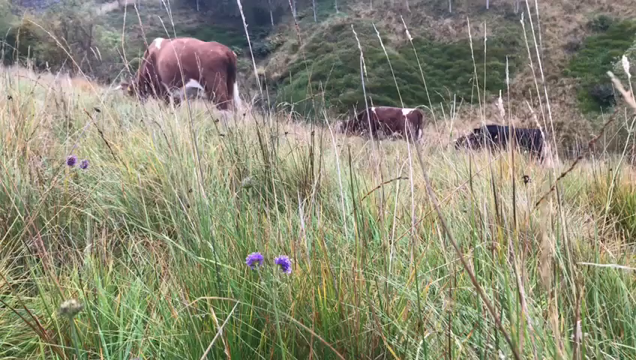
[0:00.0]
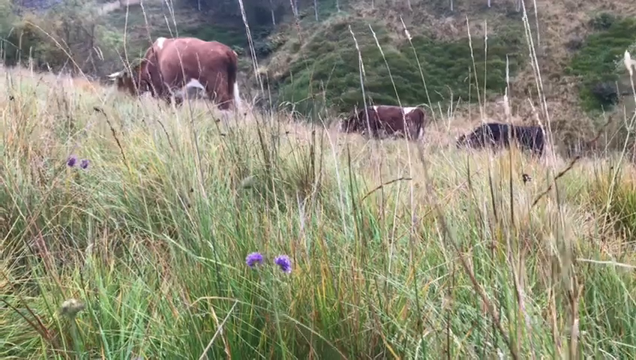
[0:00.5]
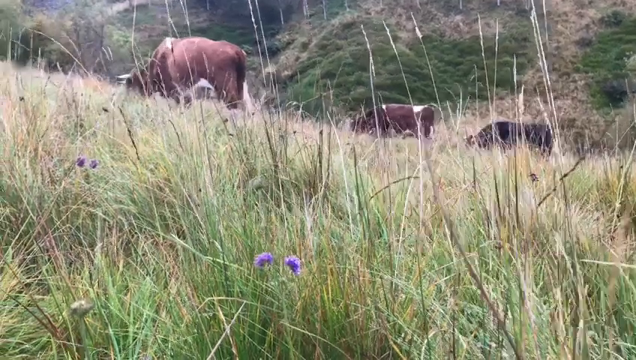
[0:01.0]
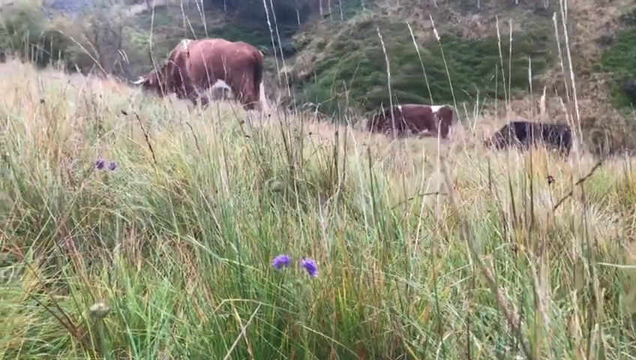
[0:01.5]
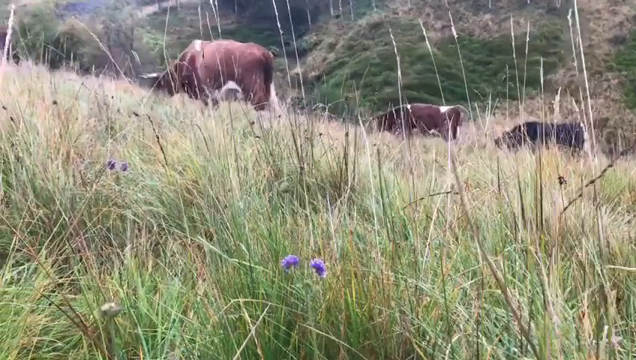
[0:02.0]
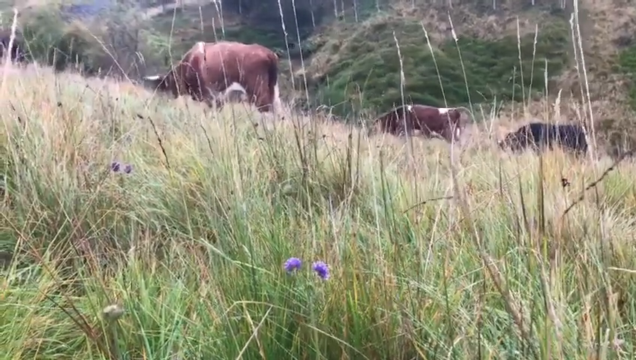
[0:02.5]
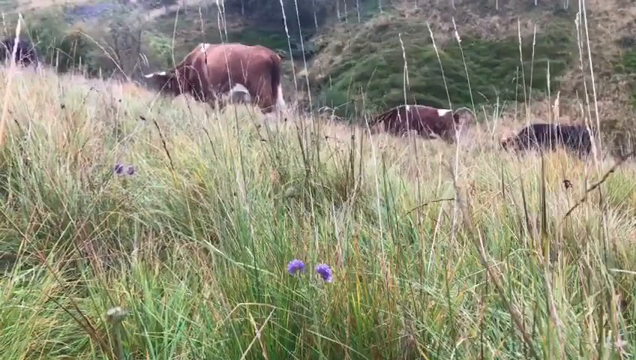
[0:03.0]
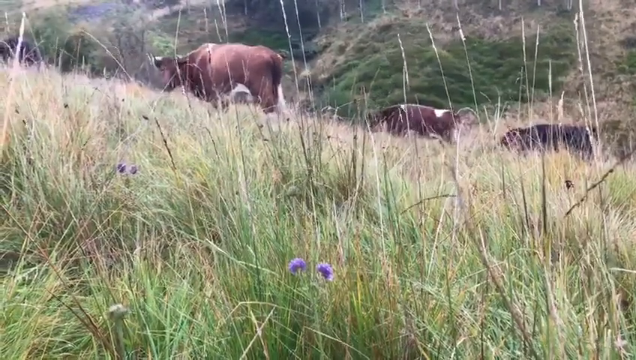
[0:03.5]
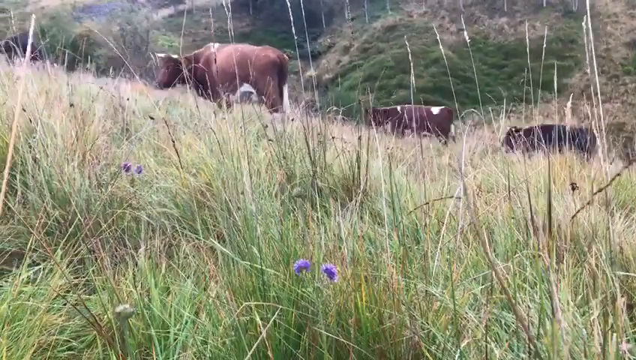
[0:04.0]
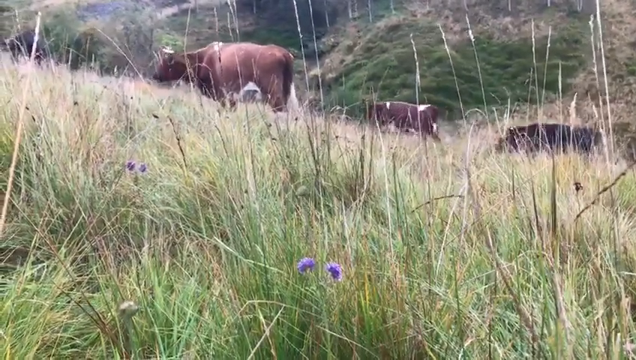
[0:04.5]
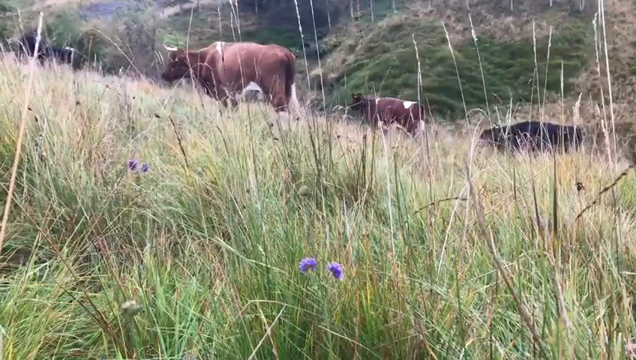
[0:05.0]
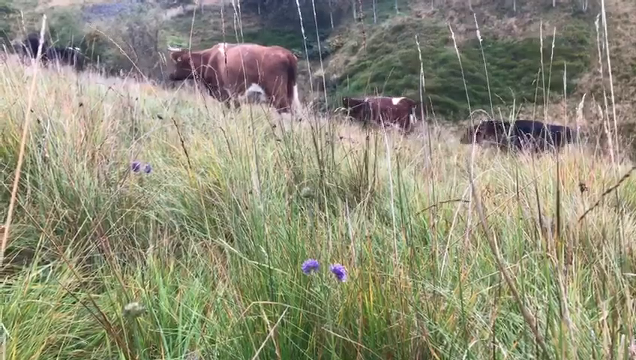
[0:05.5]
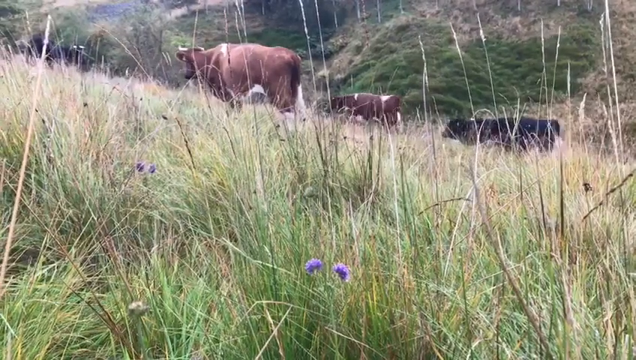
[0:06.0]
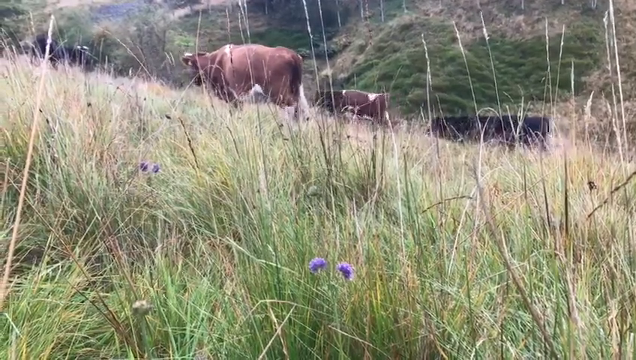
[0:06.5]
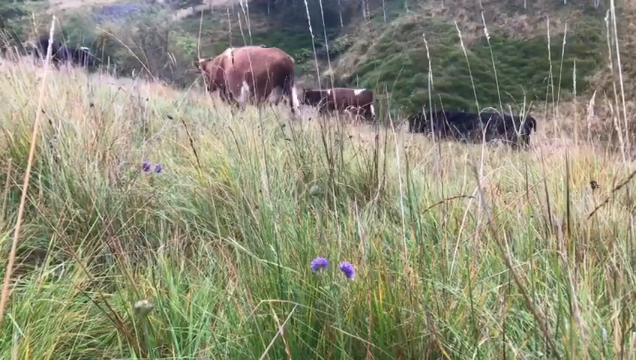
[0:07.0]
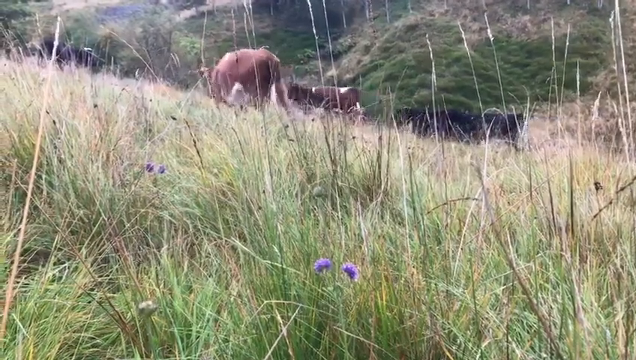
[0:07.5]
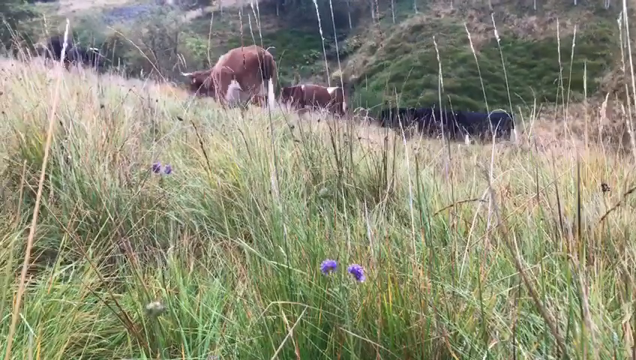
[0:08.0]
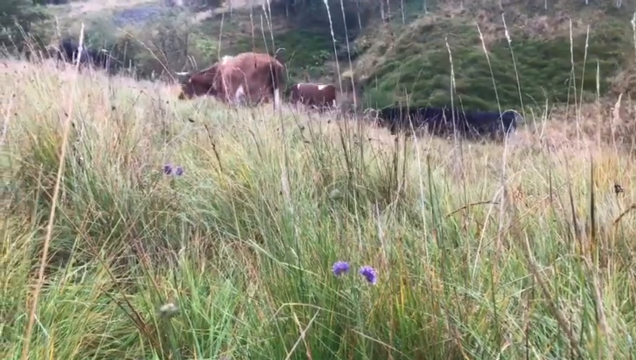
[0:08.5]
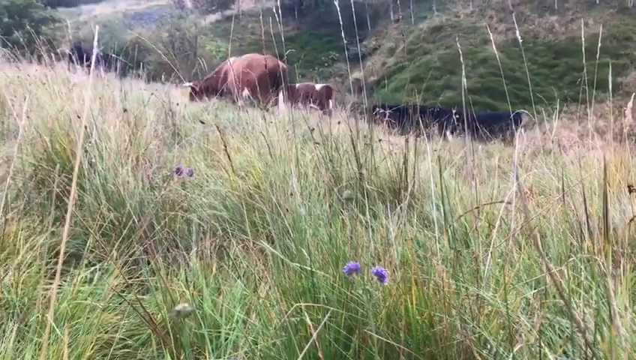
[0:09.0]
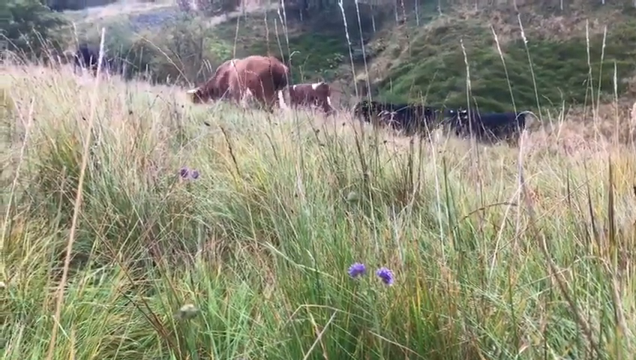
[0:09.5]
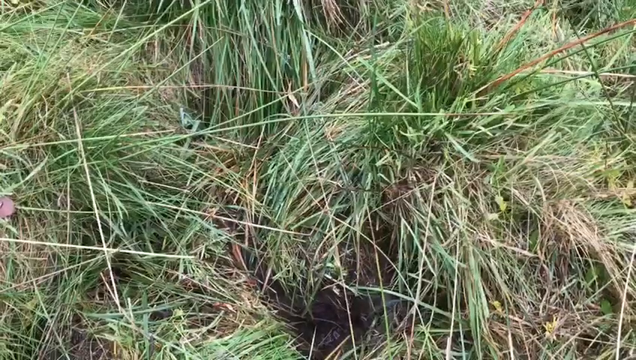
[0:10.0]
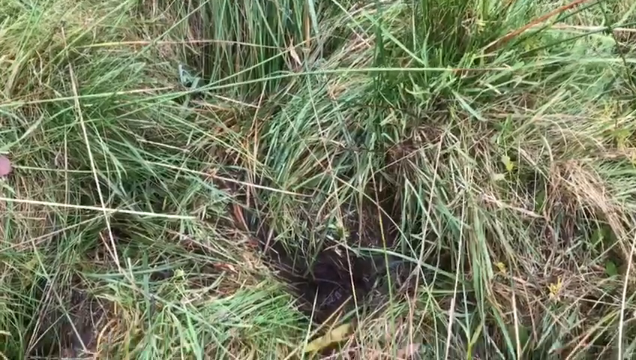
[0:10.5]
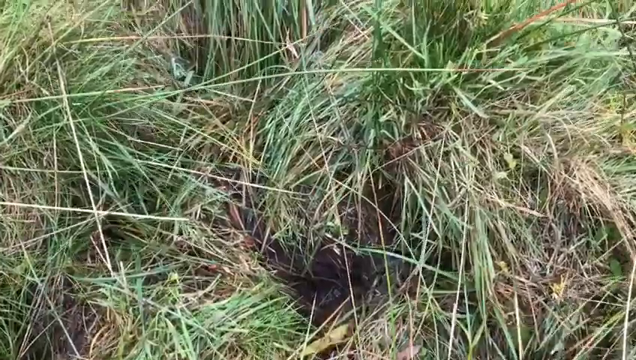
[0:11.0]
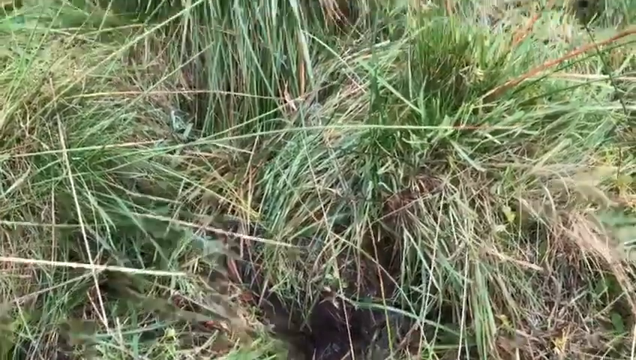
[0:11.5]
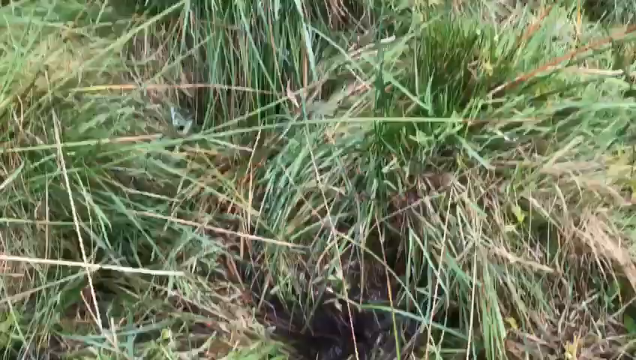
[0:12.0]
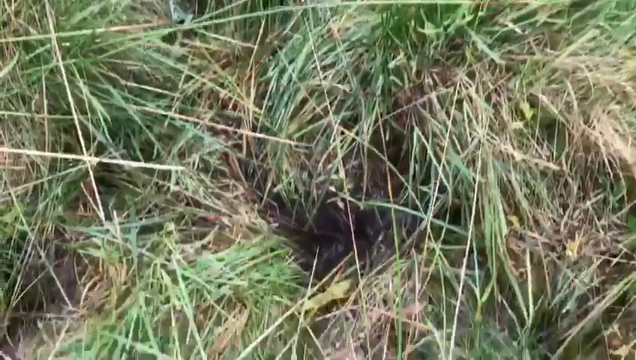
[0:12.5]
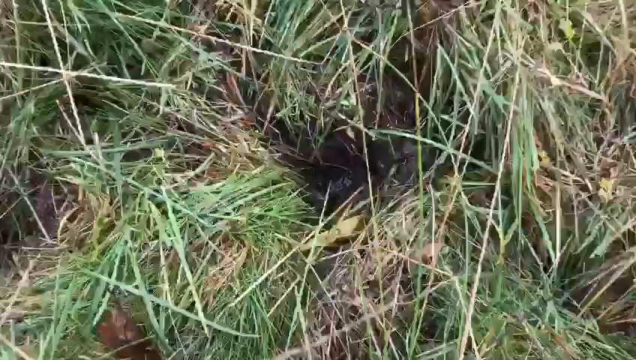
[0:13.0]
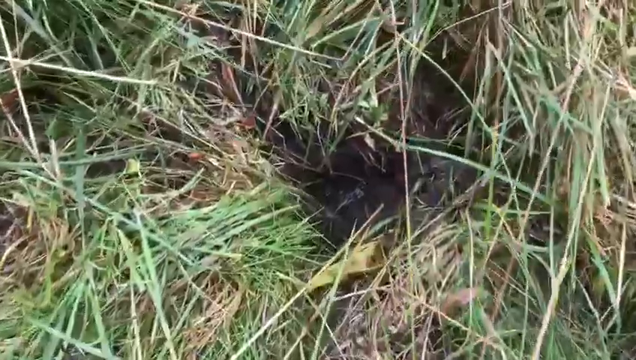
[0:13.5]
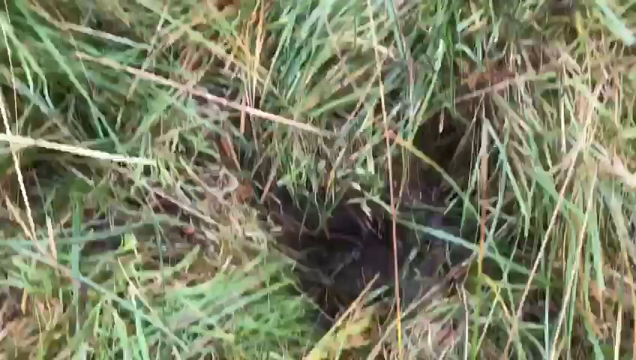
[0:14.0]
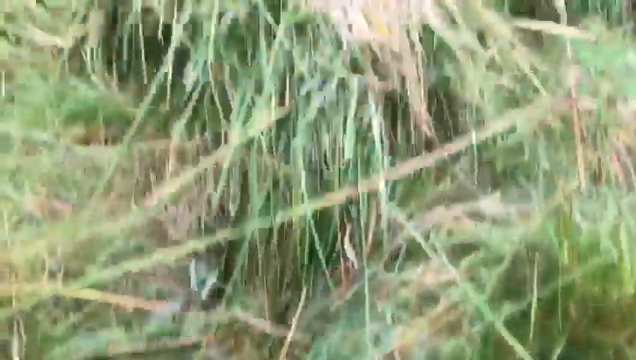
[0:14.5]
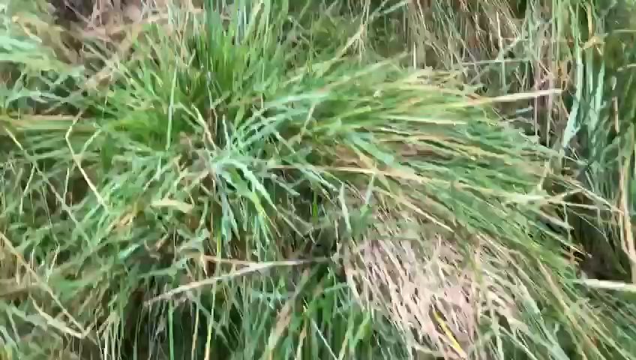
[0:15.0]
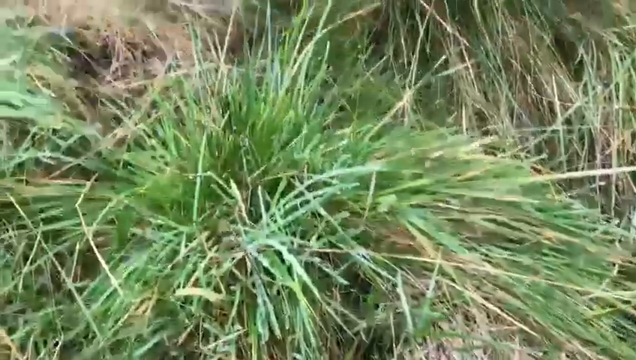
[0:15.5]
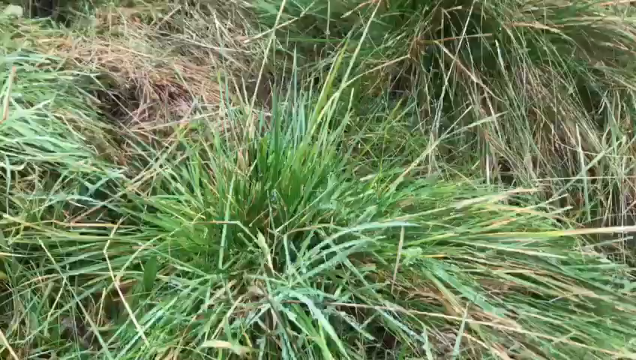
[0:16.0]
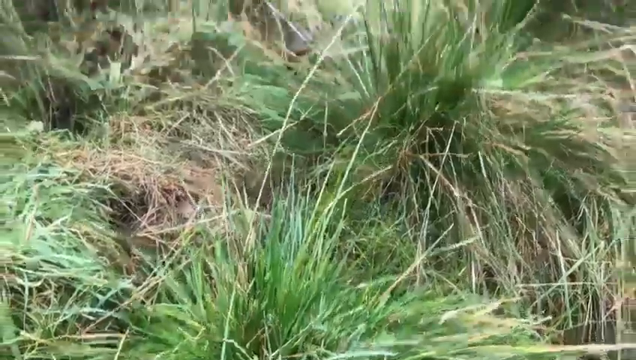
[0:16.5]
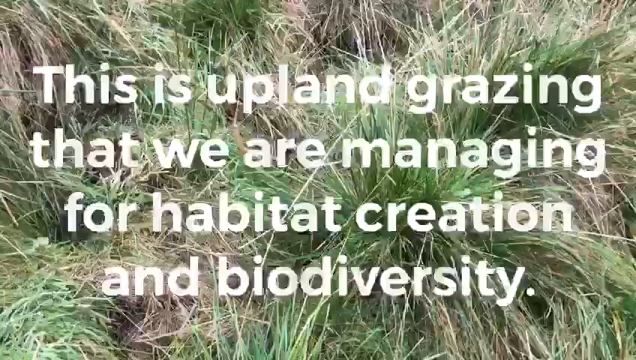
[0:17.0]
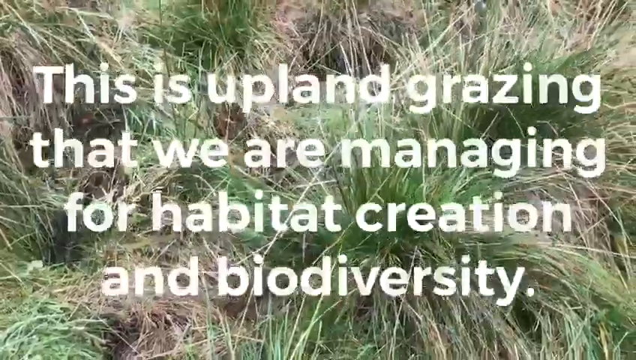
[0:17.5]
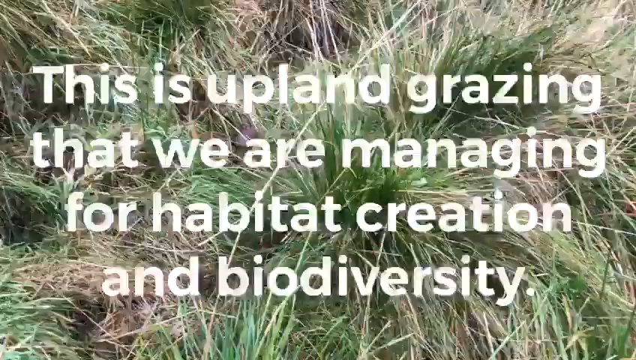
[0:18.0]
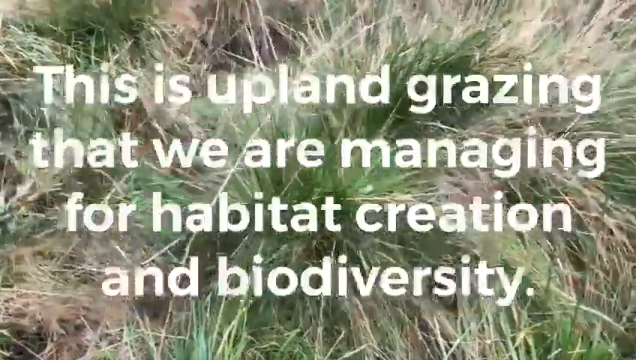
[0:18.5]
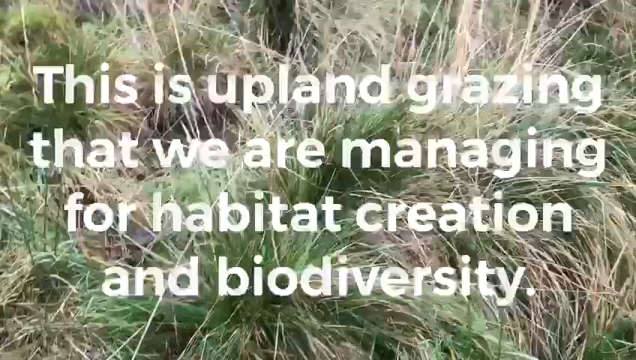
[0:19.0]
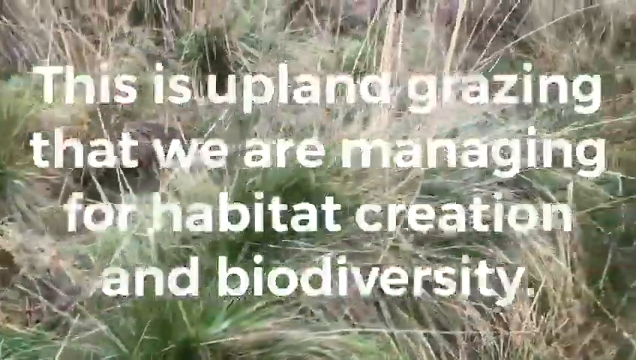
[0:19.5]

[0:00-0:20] Adult Holstein cows graze on a hillside meadow of lush grasses scattered with flowers that appear to be a type of blue clover. The camera is at ground level, looking through the grasses. At first three Holsteins are visible, black adult animals with white spots, facing the left of the screen as they graze on the hillside. In the distance at screen center, beyond these animals, a ravine runs from upper left to lower right center. Farther off, another ascending hillside rises with a steeper bank, more rocks, some green vegetation and more shrubbery. As the camera pans left, additional animals appear in the upper left corner, grazing as well. The animals walk slowly toward the left of the screen. The camera zooms in close to the ground on the grasses, then pans upward as a white text overlay appears above the grassy background, reading "This is upland grazing that we are managing for habitat creation and biodiversity."